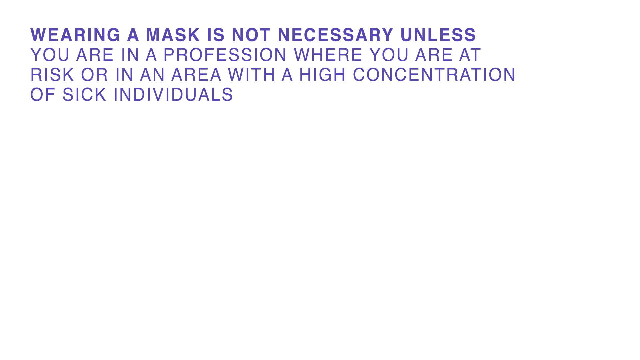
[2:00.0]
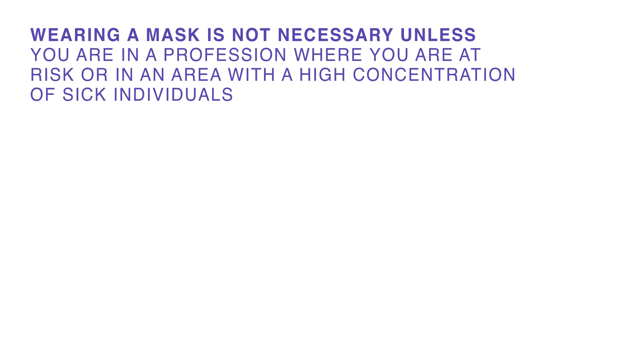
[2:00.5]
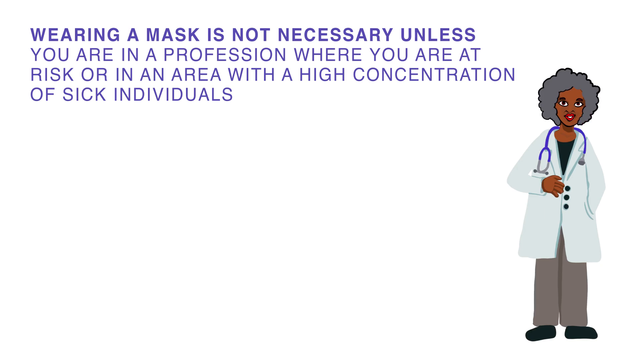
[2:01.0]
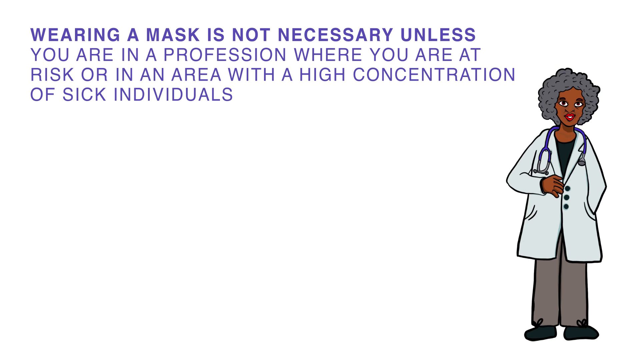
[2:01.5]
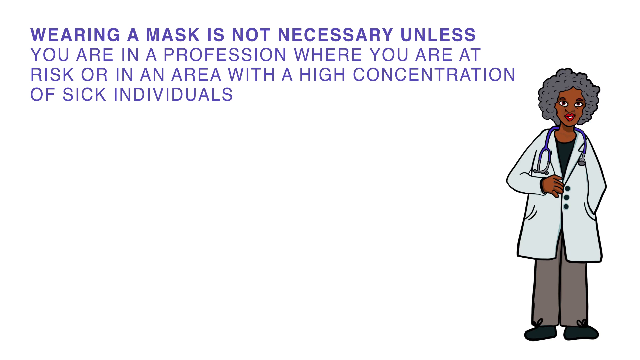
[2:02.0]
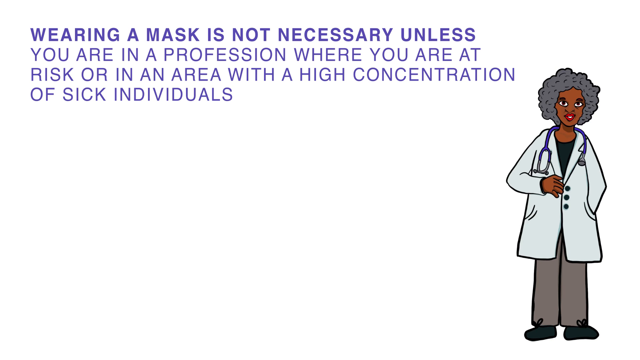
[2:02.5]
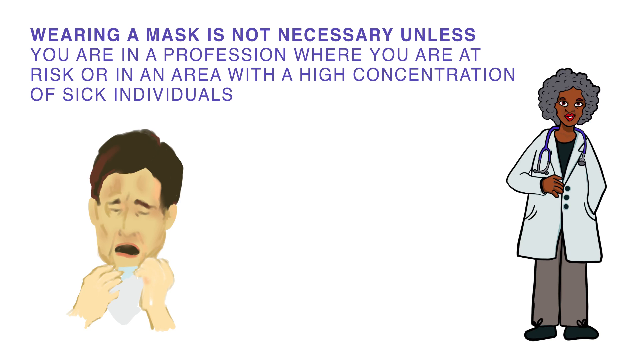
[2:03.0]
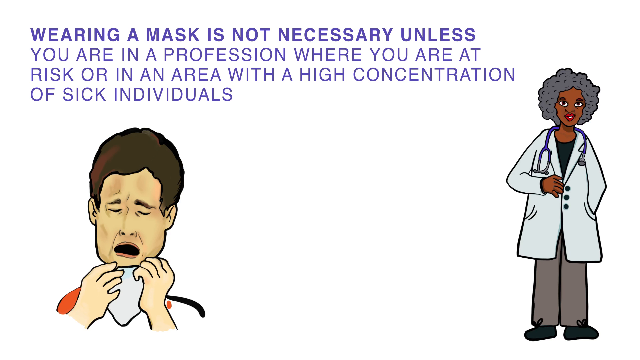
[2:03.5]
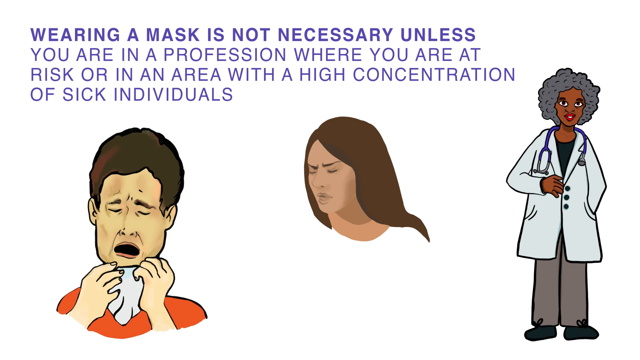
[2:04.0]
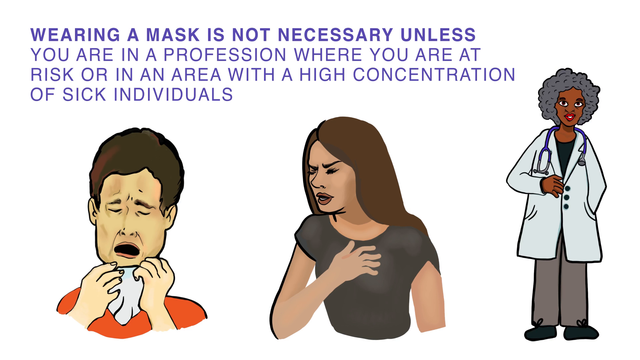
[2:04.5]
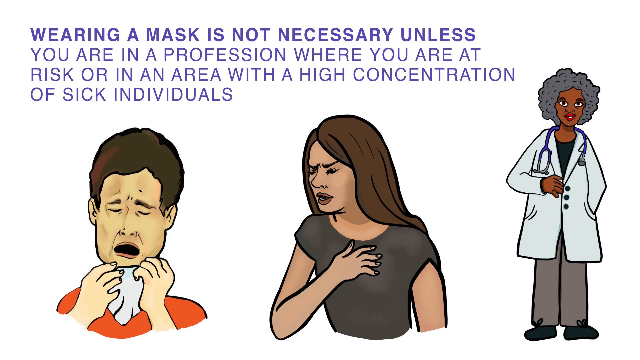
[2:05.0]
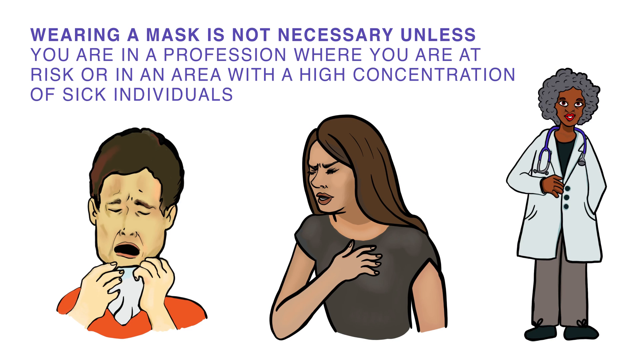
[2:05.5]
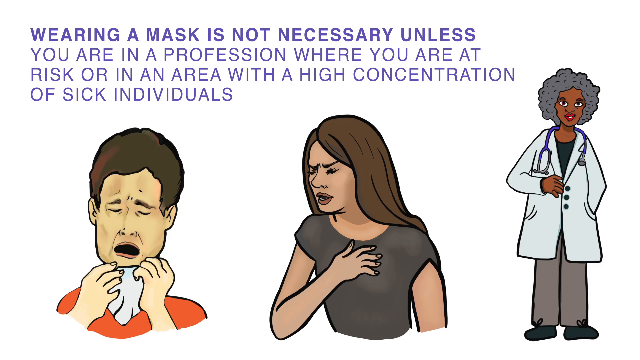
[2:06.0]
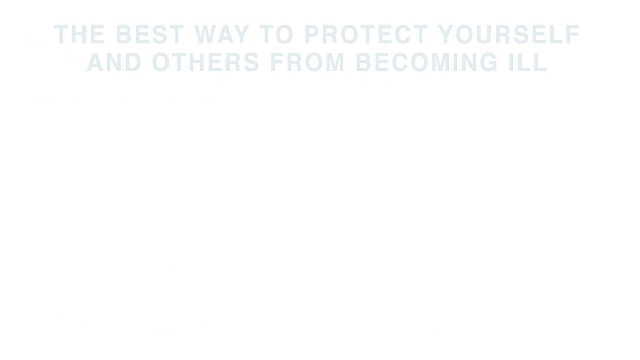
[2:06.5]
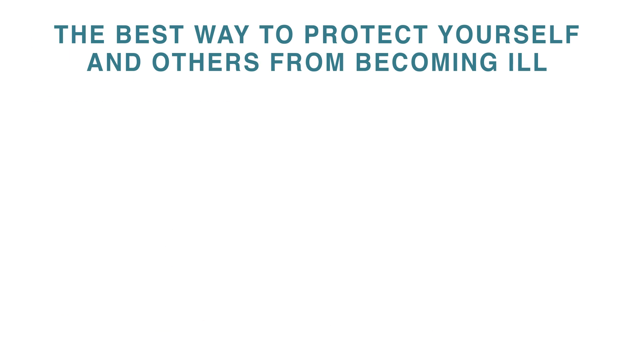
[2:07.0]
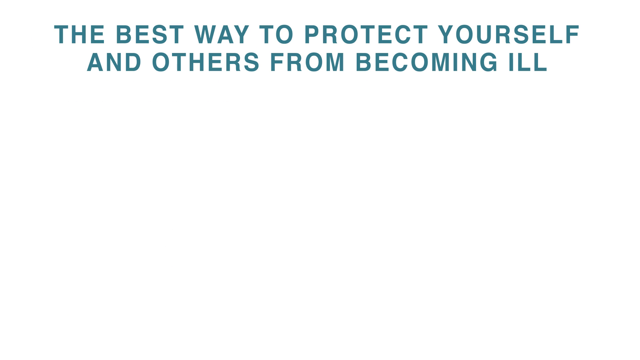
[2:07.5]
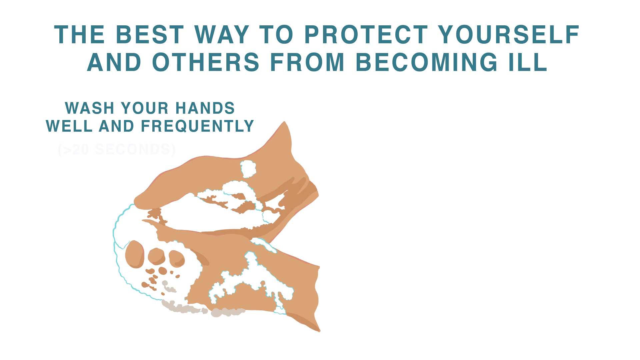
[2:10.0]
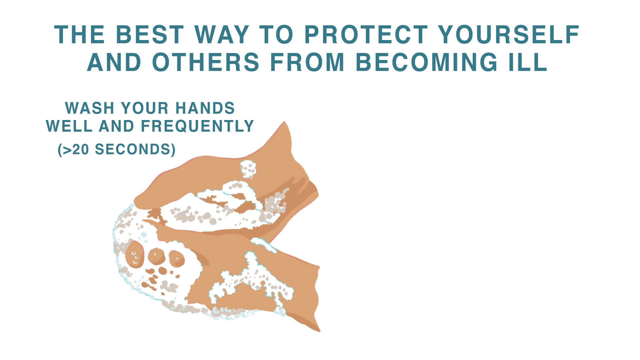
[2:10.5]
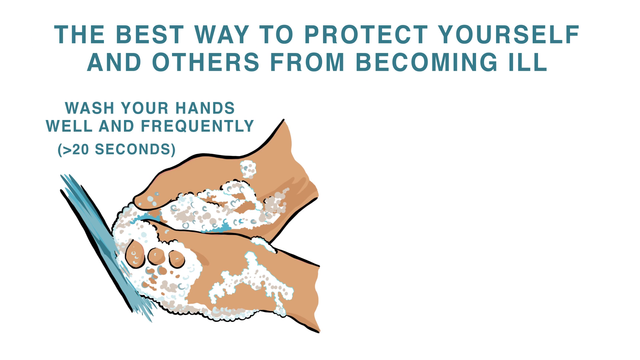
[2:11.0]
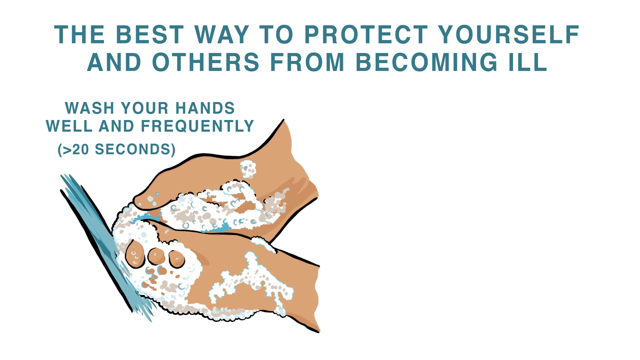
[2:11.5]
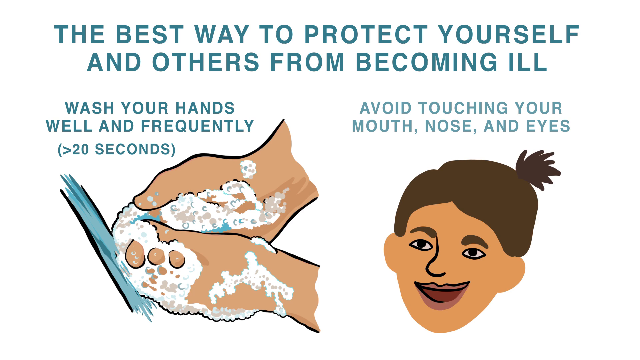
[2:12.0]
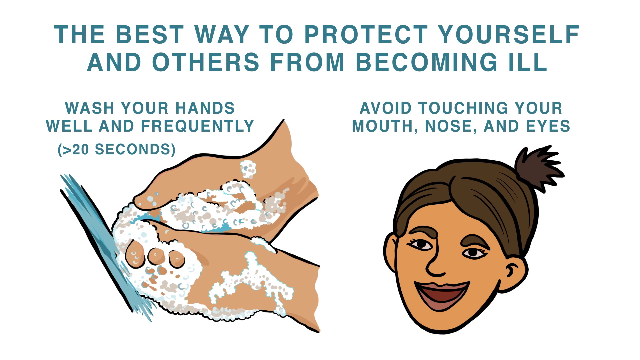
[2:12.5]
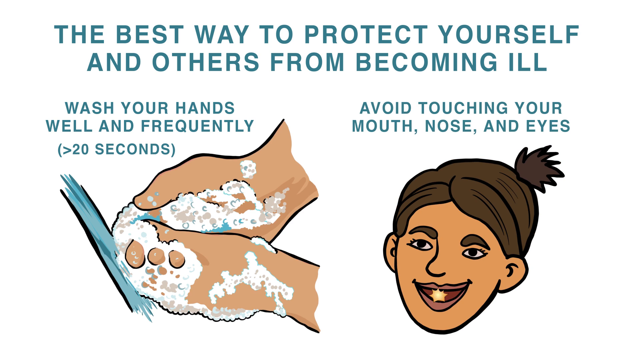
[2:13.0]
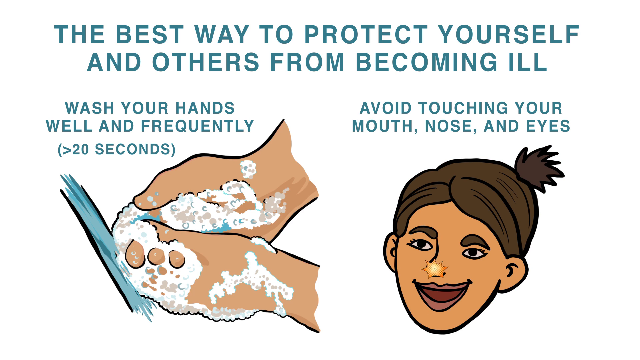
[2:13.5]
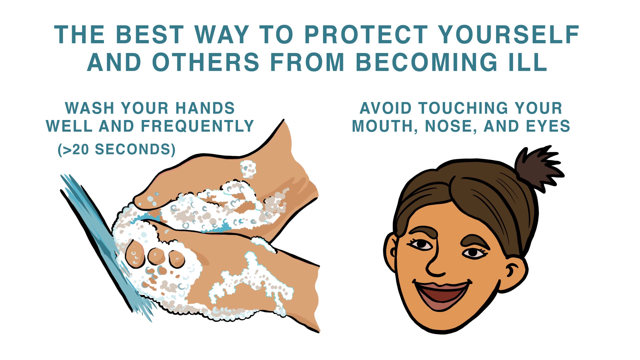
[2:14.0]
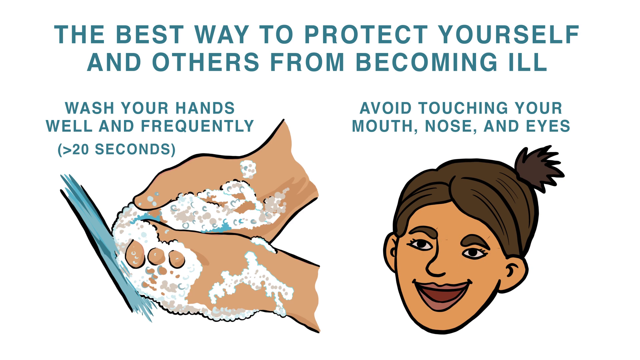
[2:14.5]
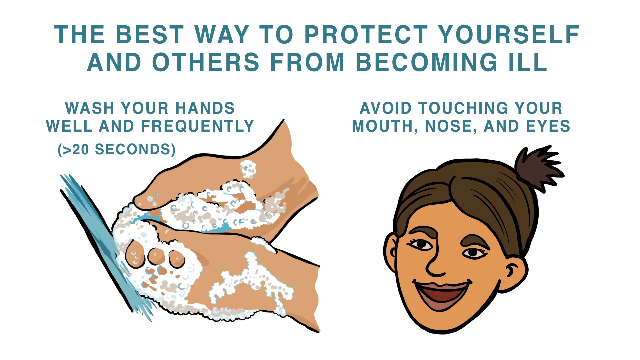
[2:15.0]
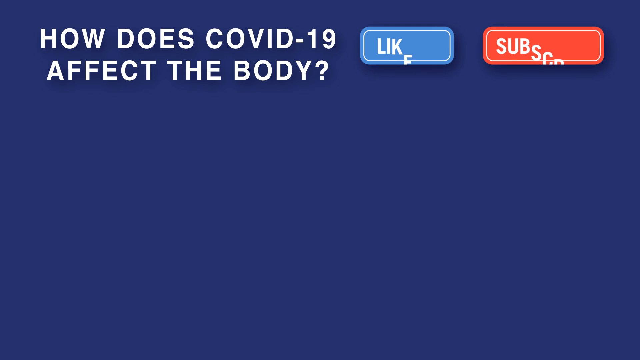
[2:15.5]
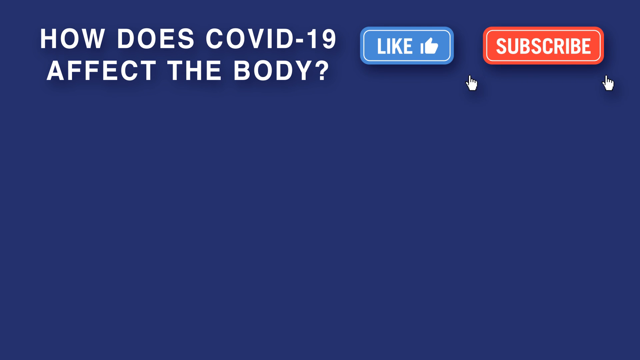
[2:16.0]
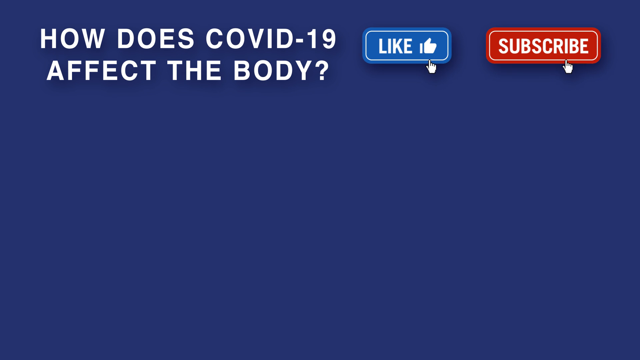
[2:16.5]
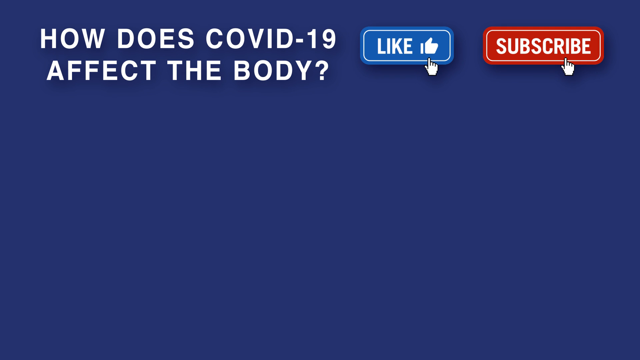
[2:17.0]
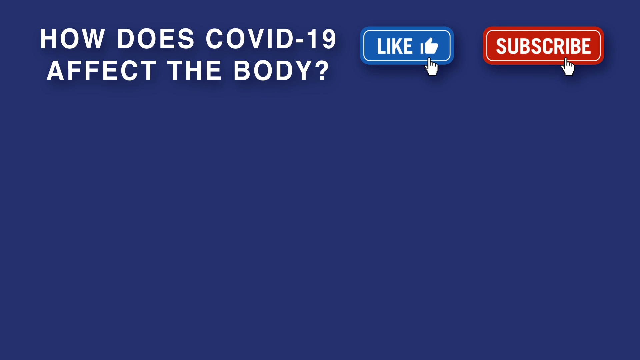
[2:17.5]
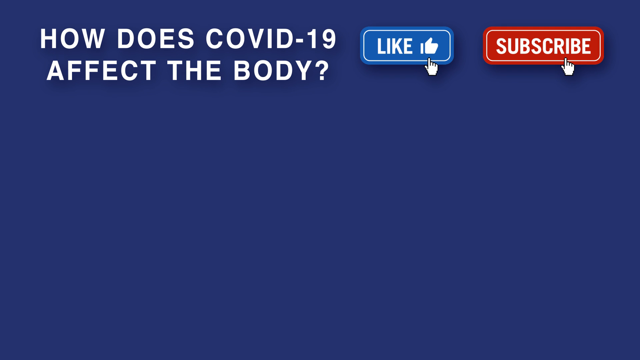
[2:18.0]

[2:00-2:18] At the top of a white screen, purple text reads "Wearing a mask is not necessary unless you are in a profession where you are at risk or in an area with a high concentration of sick individuals." A cartoon doctor pops up at the bottom right: a woman with gray curly hair and brown skin, a stethoscope resting around her shoulders, wearing a white physician's coat, a dark-colored shirt and gray pants, and smiling. Another character pops up at the bottom left: a man with brown hair and yellow-tinted skin who appears to be sick, coughing into a handkerchief. Then an image of a woman appears in the middle; she has long brown hair, wears a gray top, and her right hand is over her chest, her eyes squinted as if she is having trouble breathing. After a transition, text reads "the best way to protect yourself and others from becoming ill, wash your hands well and frequently for at least 20 seconds," with an animated image of a person washing their hands below it. Text about avoiding touching your face follows, with an animated image of a woman below it.